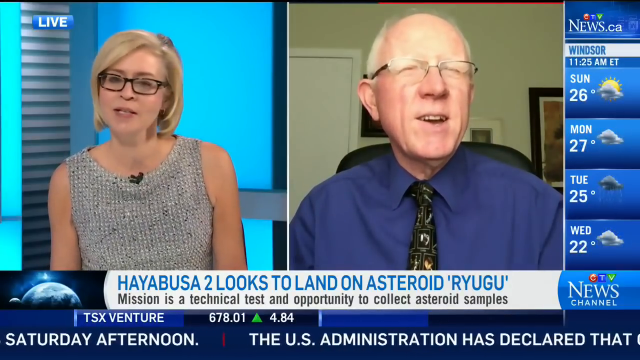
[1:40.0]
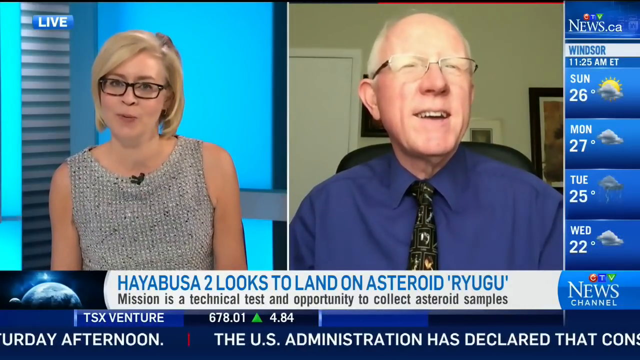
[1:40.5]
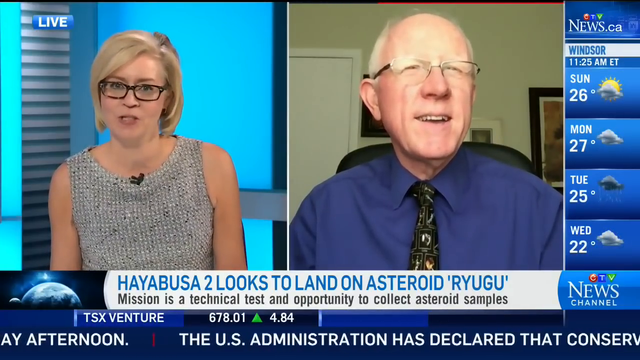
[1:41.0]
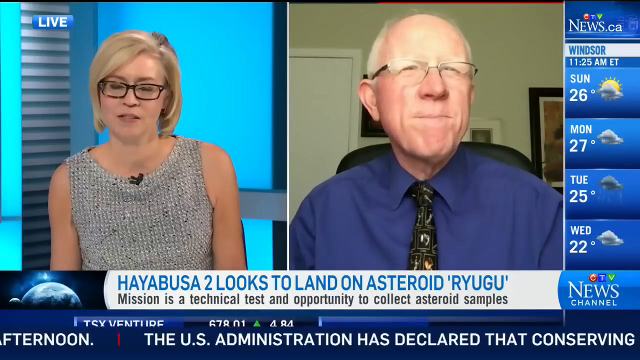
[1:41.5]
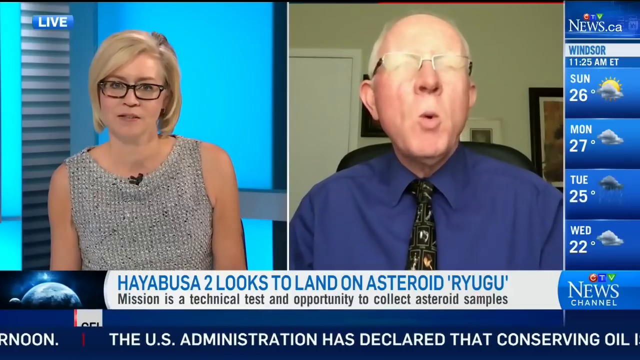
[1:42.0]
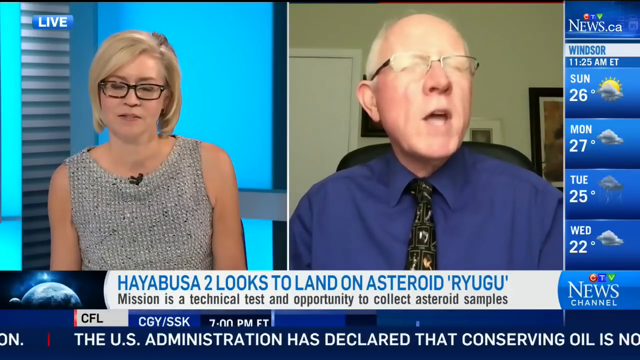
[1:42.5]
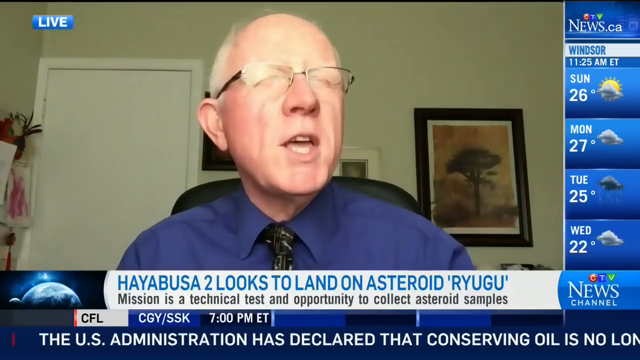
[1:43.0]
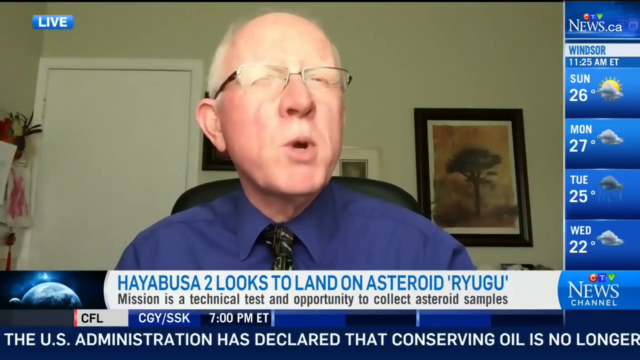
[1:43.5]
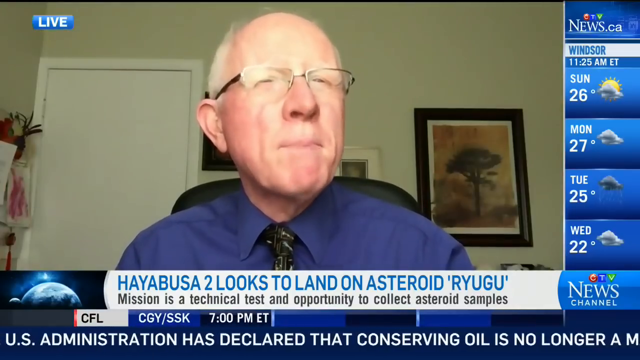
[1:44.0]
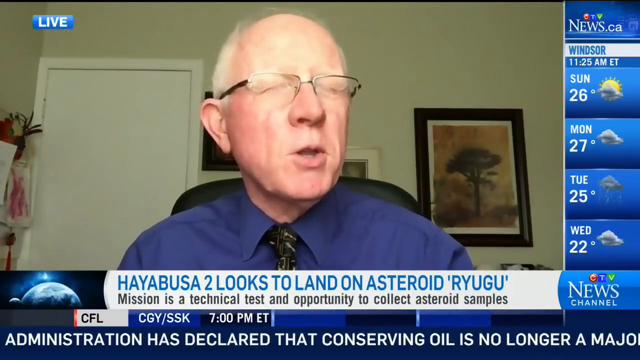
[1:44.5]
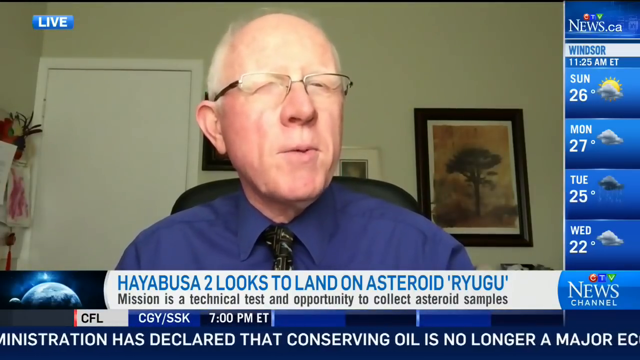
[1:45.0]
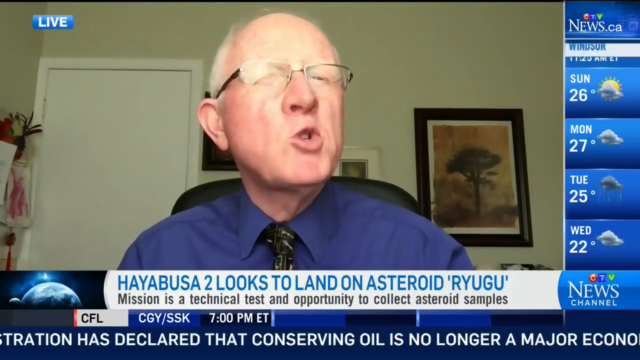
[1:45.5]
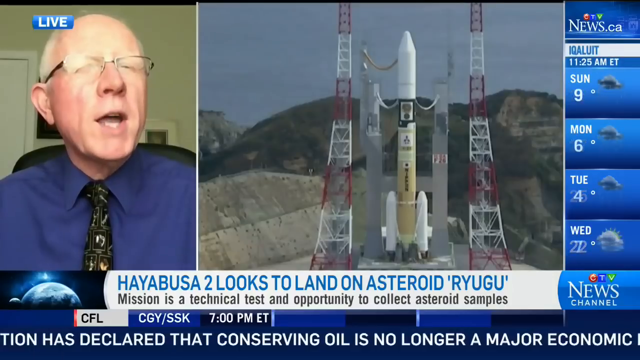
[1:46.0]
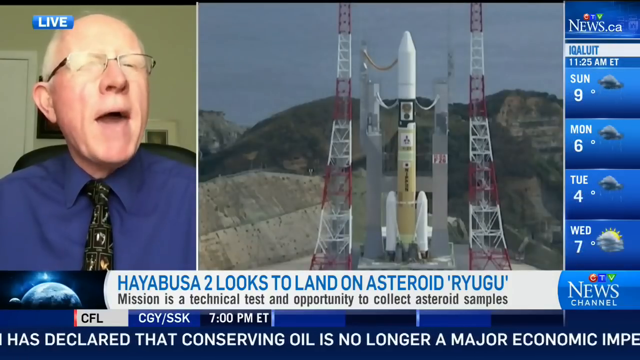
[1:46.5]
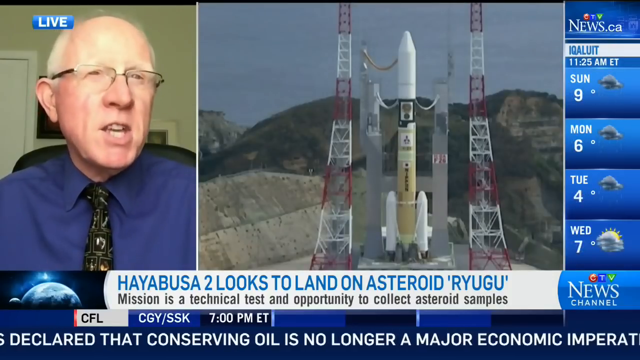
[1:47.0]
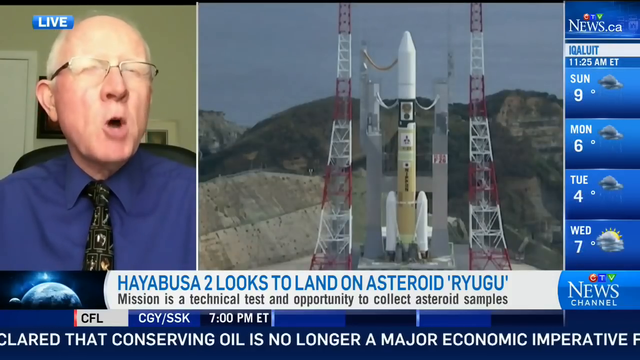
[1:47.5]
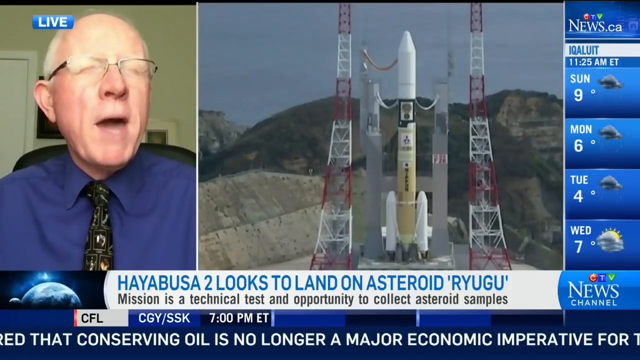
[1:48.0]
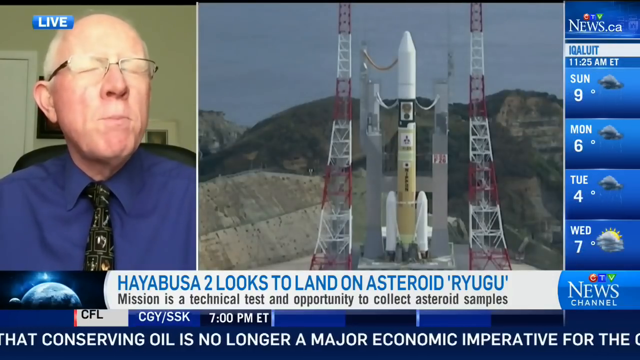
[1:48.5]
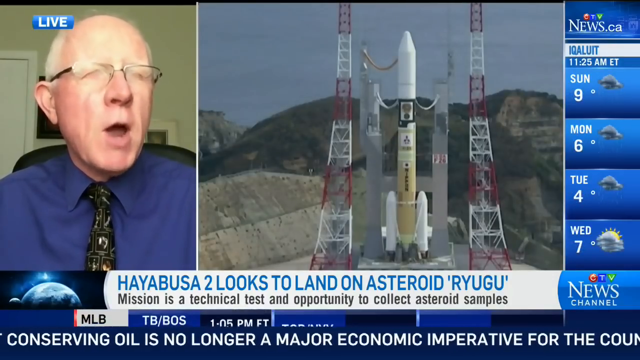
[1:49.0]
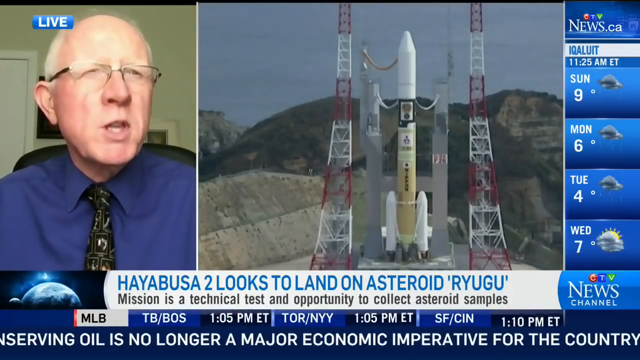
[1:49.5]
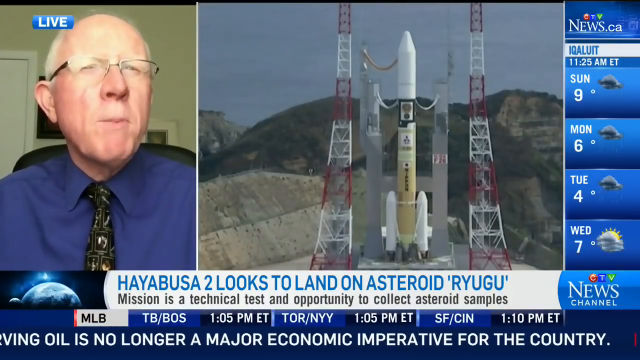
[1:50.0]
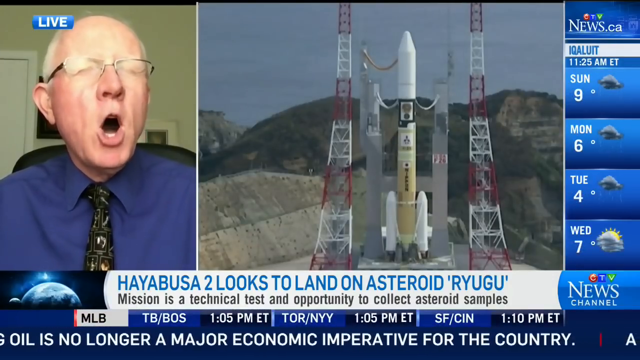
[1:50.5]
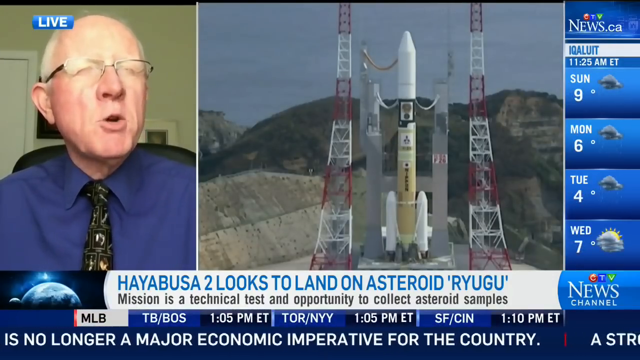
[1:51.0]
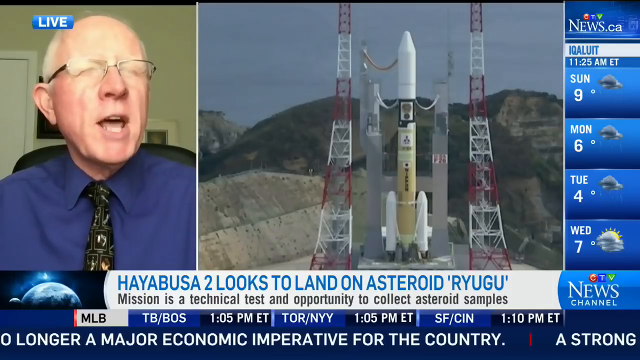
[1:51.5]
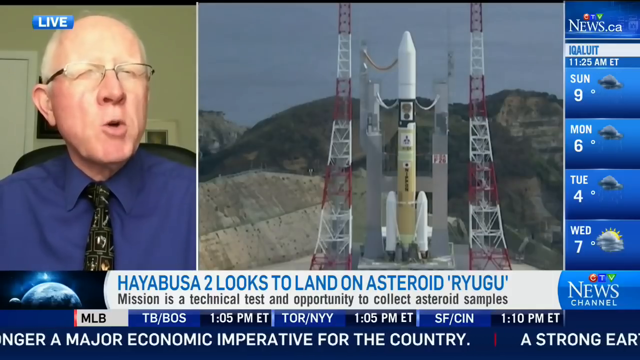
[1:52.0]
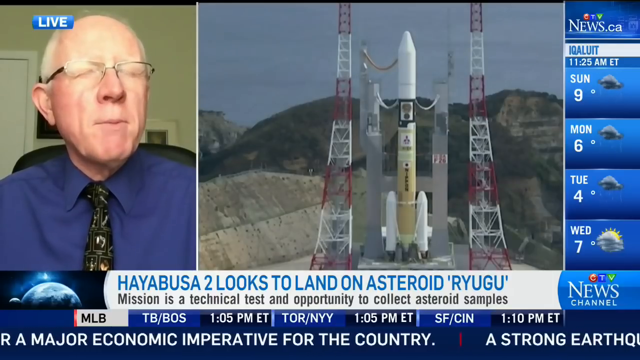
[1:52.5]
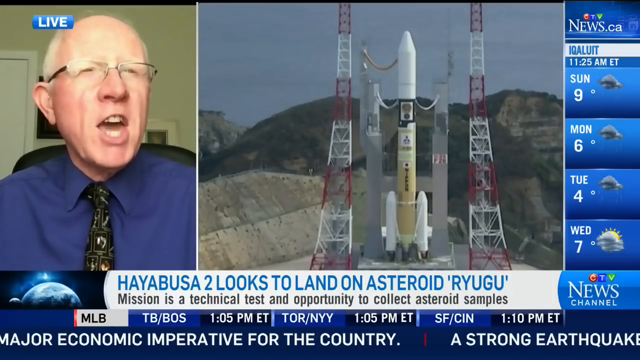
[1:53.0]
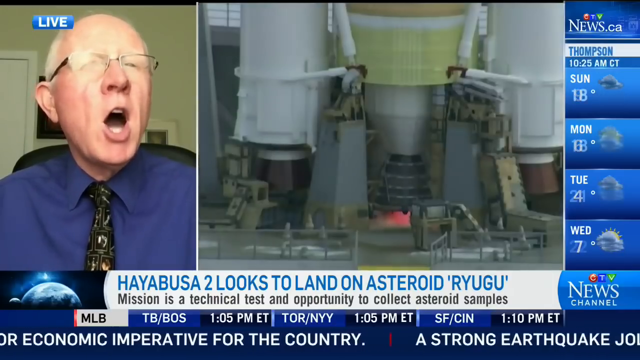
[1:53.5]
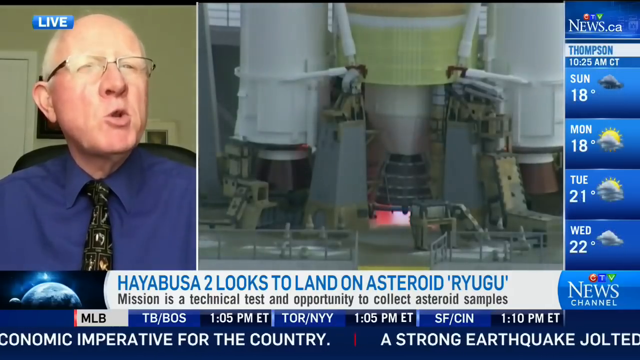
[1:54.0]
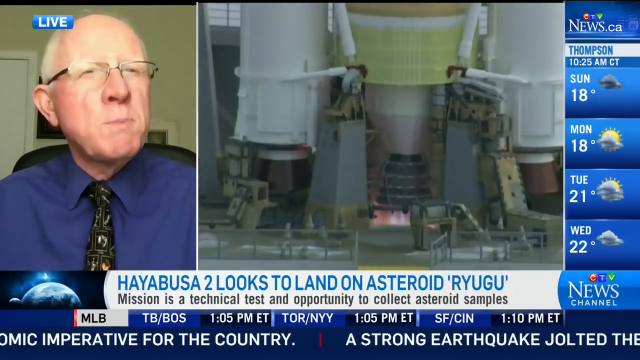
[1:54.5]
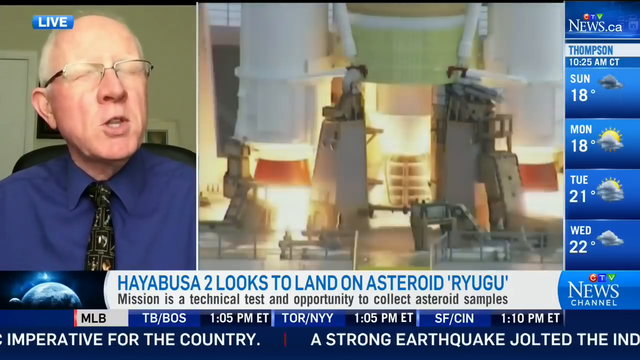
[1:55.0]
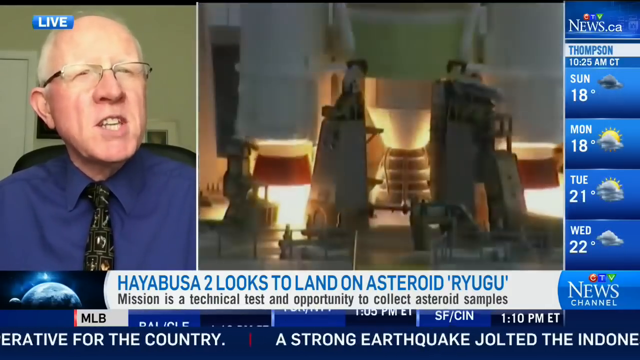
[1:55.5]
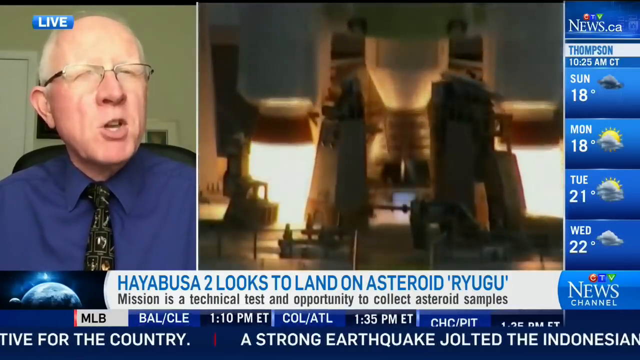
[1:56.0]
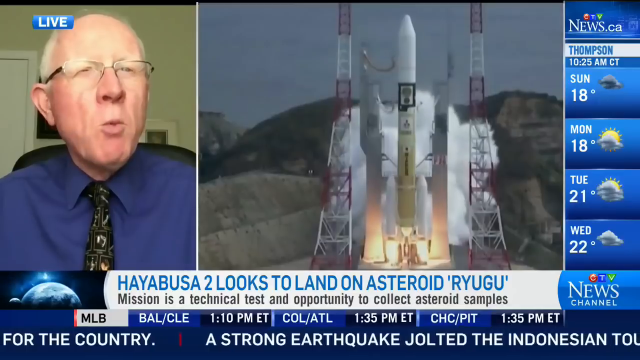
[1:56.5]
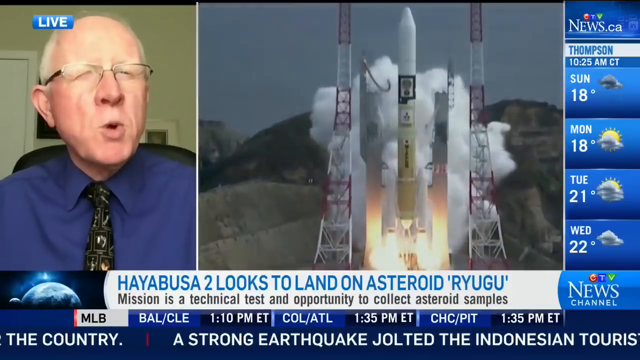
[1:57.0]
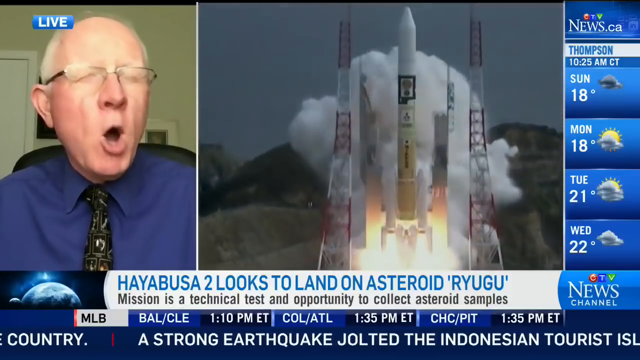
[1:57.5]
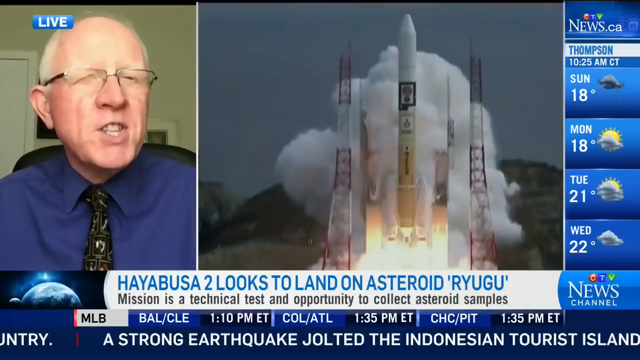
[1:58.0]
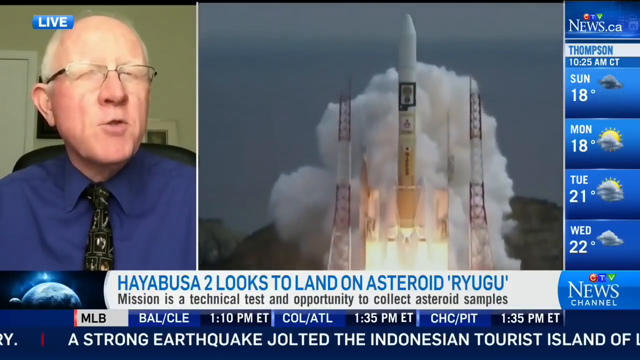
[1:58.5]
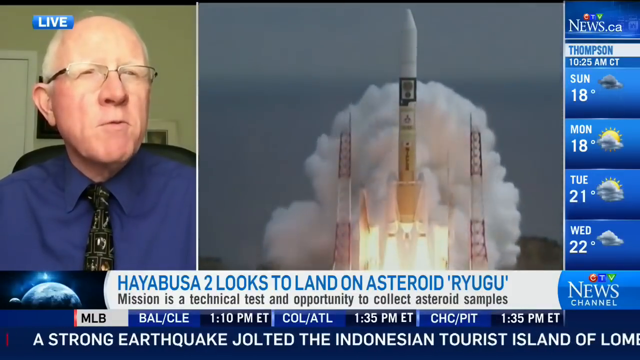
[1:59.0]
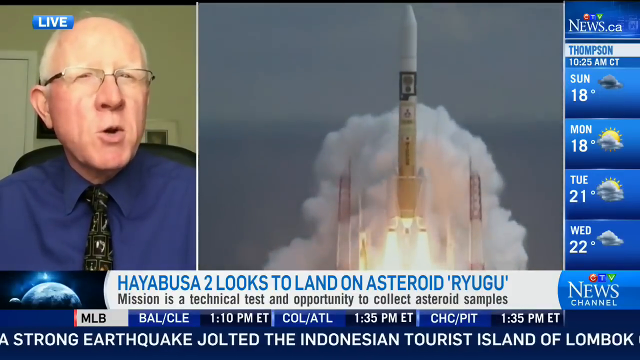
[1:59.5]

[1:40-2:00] The conversation between Erin Paul and Professor Delaney continues on the subject of the Hayabusa2 mission to asteroid Ryugu. The forecast for Windsor shows 26 degrees and sunny intervals on Sunday, 27 degrees and cloudy on Monday, thunderstorms and 25 degrees on Tuesday, and cloudy and 22 degrees on Wednesday. A news item reports that the Trump administration has stated conserving oil is no longer a major economic imperative for the USA. A forecast for the far north of Canada shows very cloudy and 9 degrees on Sunday, showers and 6 degrees on Monday, a very chilly 4 degrees and showers on Tuesday, and 7 degrees and sunny intervals on Wednesday. A rocket takes off, possibly the mission to the asteroid. Another item reports a strong earthquake on the tourist island of Lombok in Indonesia.